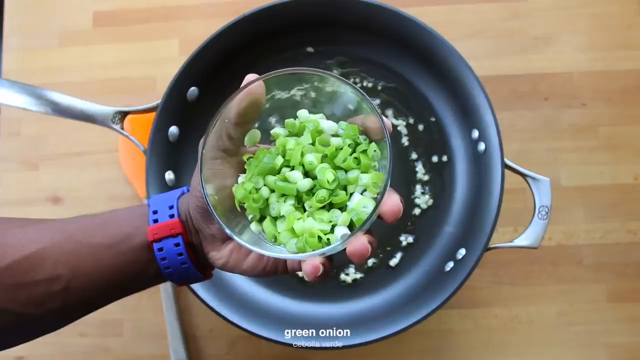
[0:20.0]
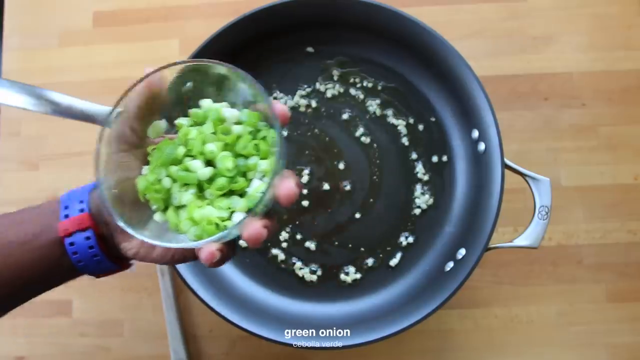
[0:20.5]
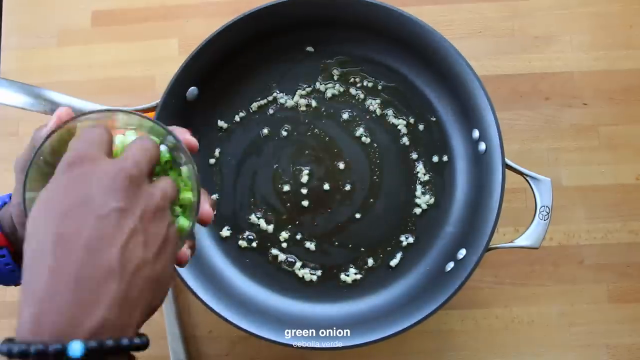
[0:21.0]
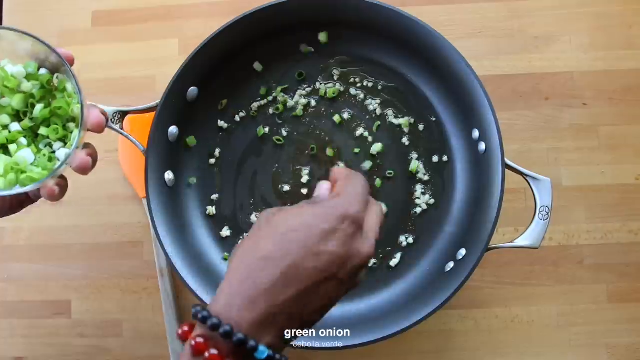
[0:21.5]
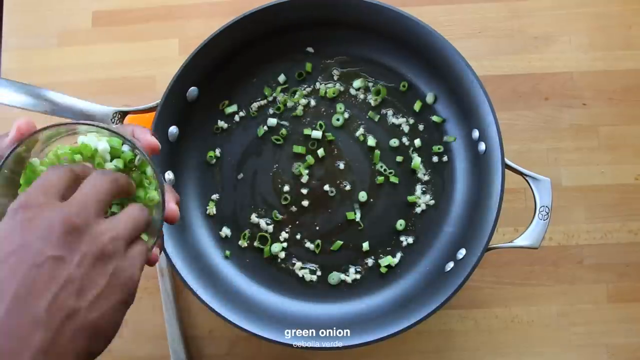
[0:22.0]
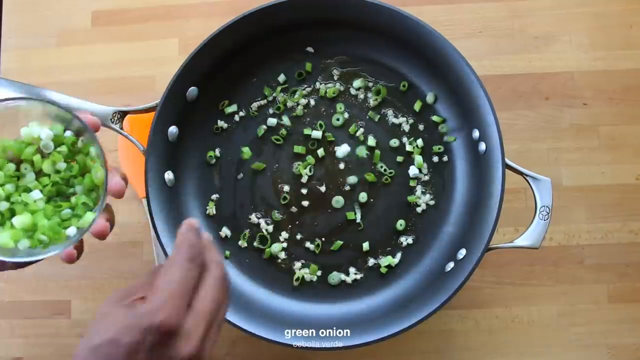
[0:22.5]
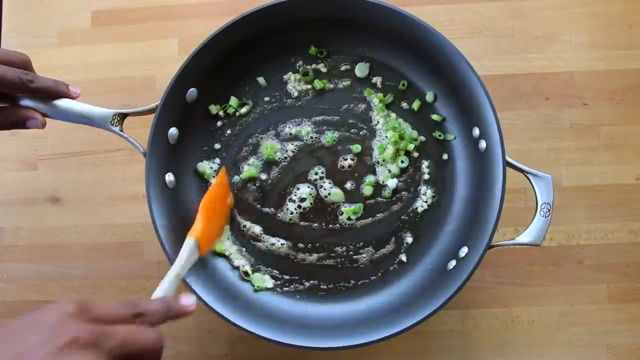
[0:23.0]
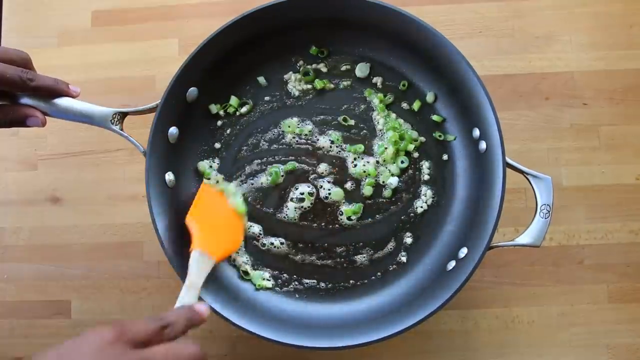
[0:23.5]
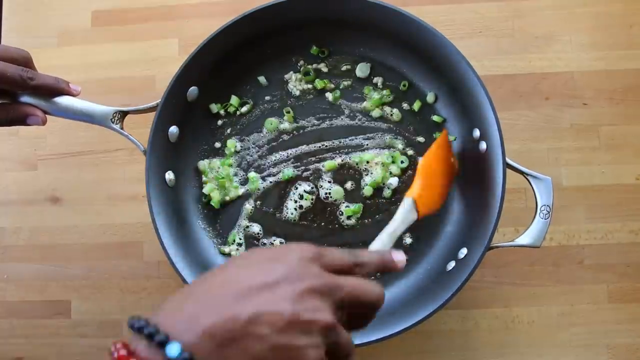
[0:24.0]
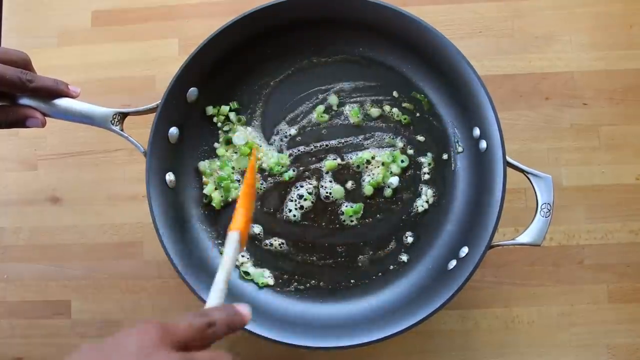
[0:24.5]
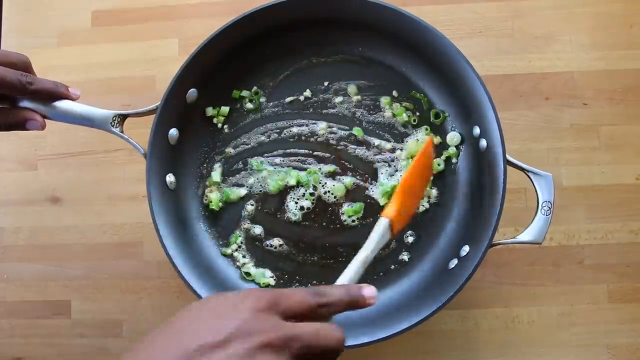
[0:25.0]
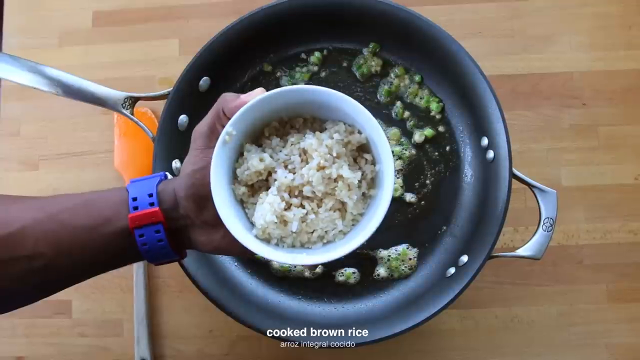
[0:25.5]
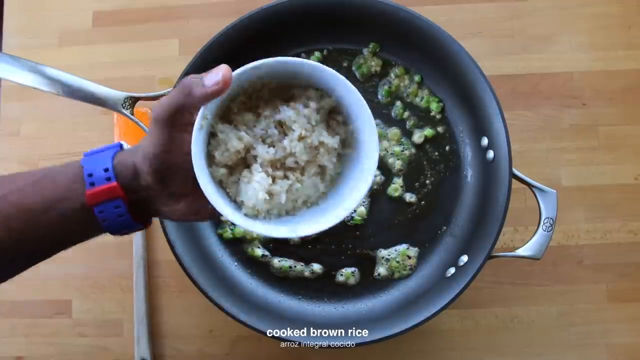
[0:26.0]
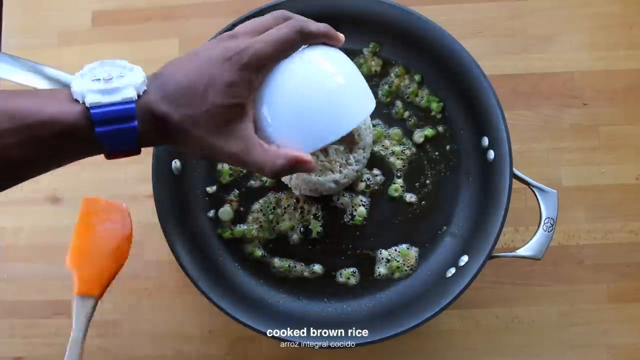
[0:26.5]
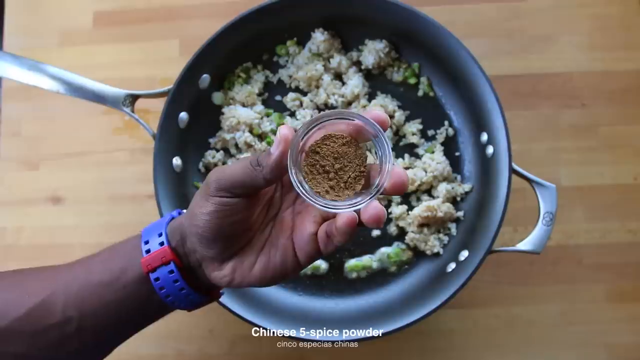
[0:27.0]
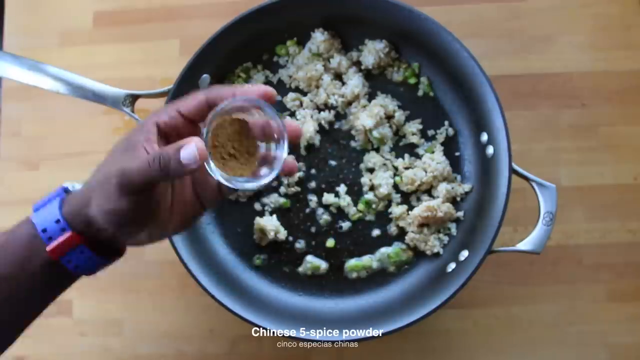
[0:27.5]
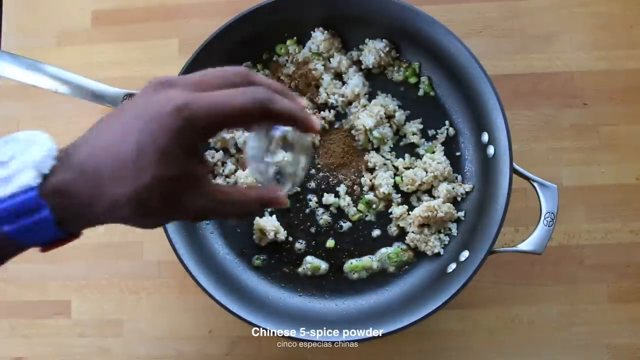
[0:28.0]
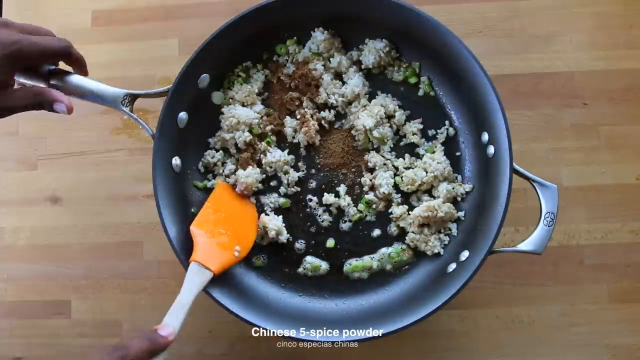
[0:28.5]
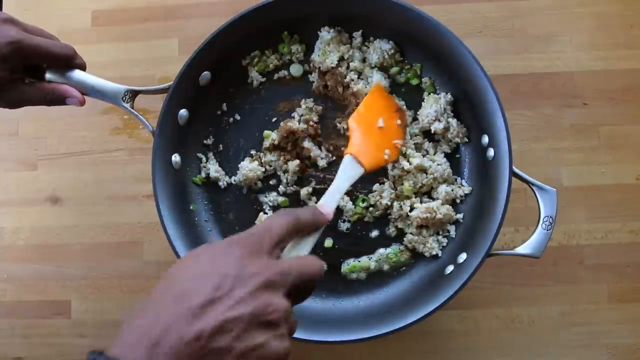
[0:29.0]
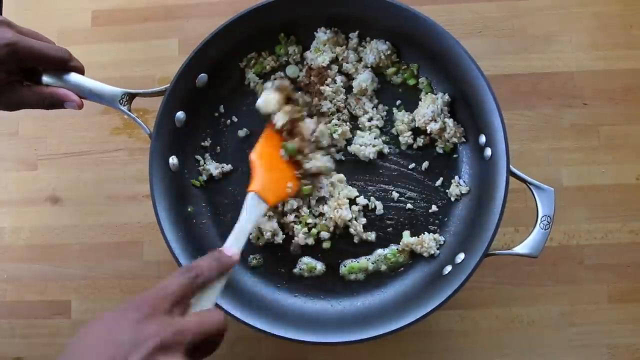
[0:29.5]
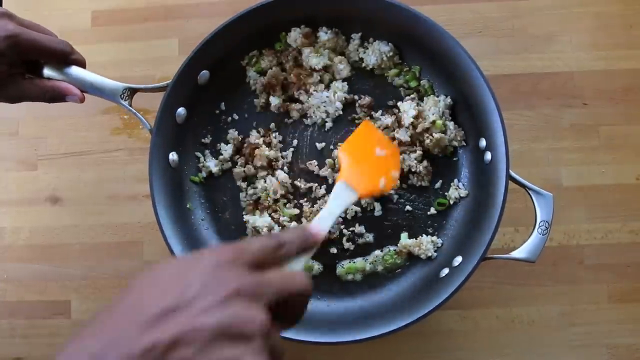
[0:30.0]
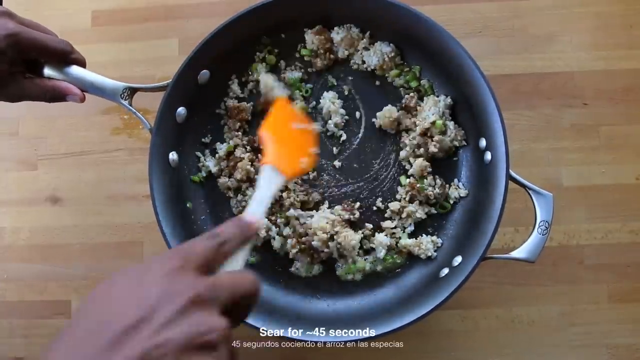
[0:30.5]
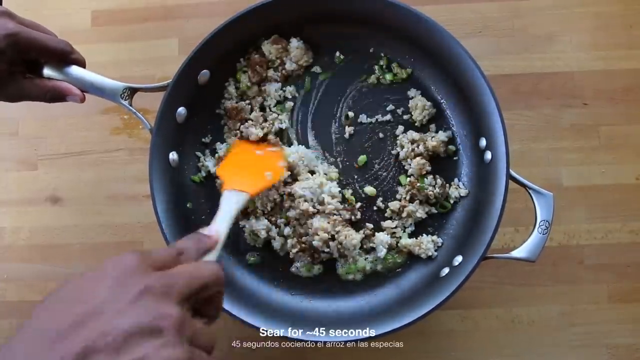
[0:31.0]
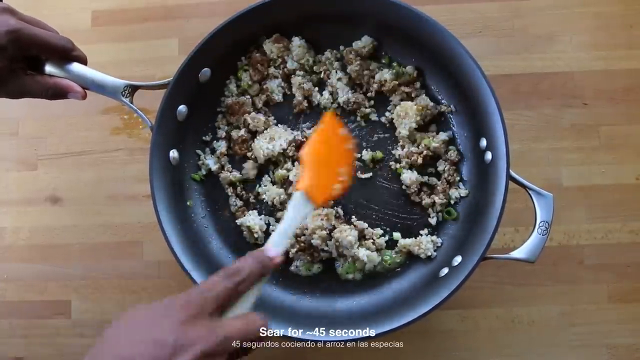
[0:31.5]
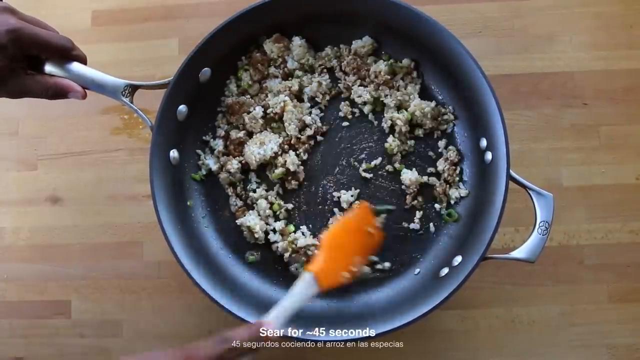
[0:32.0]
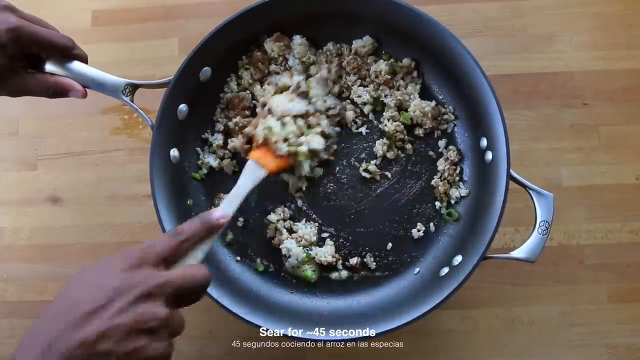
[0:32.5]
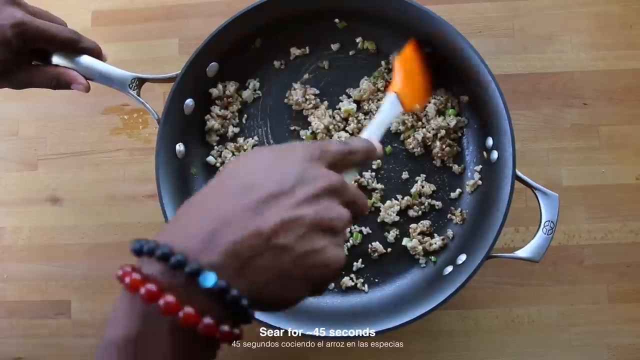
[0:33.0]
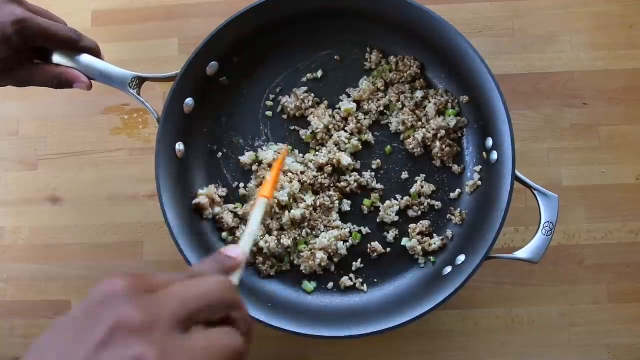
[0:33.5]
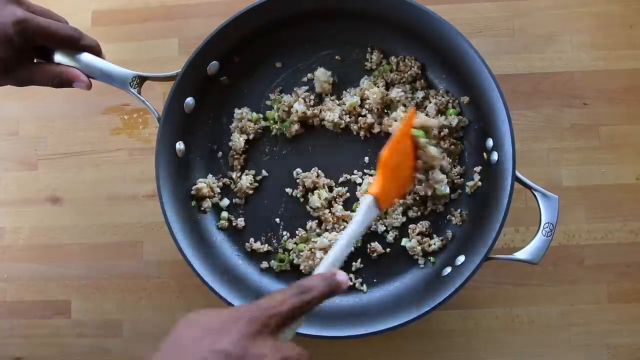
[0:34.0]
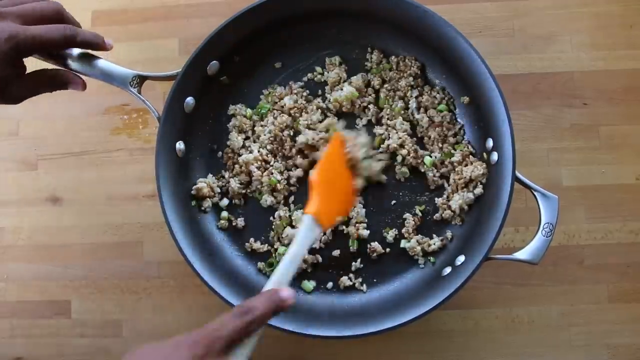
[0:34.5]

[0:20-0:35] Ingredients are added to a frying pan step by step. The pan, dark black with stainless steel accents, is kind of sitting up above a wooden, kind of butcher block style countertop, and already has oil and garlic frying in it. The man holds glass containers with each ingredient, and as each is added a subtitle at the bottom names it in both English and Spanish. He pulls out green onions and kind of sprinkles them across the pan as "green onion" appears at the bottom of the screen, then moves them around before dumping cooked brown rice into the pan. Next he takes a container of powder labeled "Chinese five spice powder", adds it, and mixes everything together with a spatula while text at the bottom says to let it sear for 45 seconds.